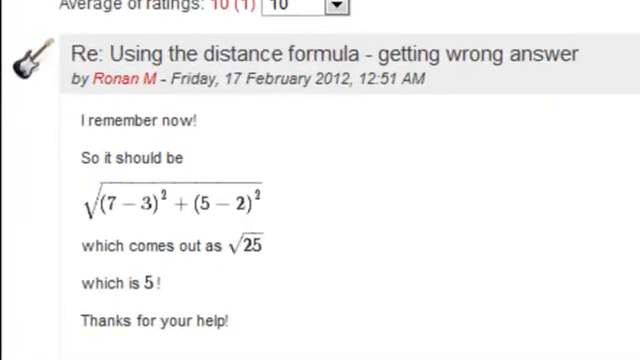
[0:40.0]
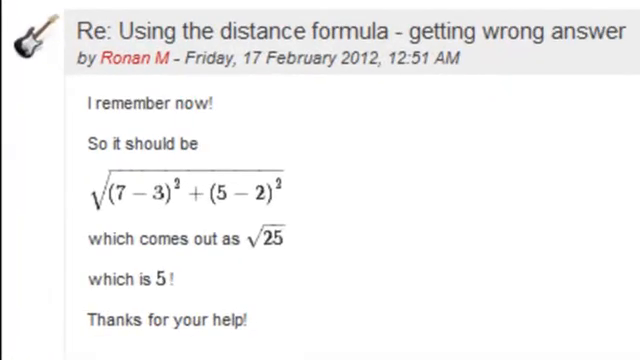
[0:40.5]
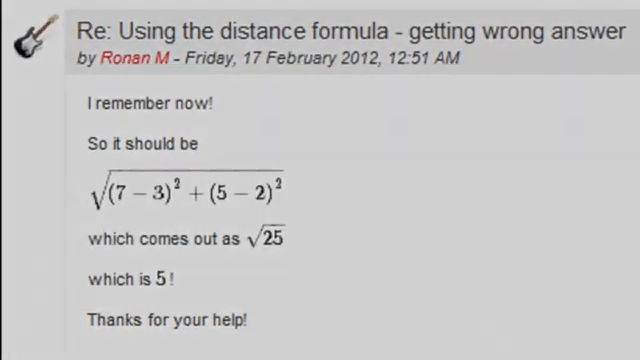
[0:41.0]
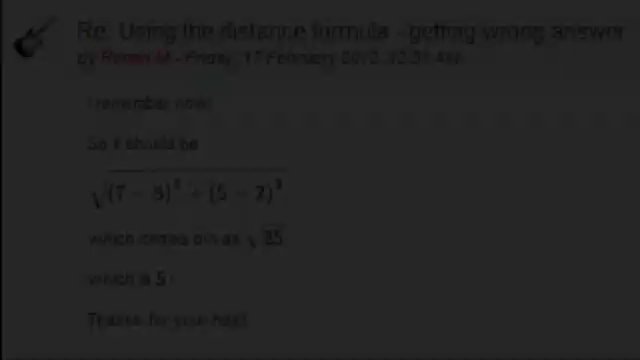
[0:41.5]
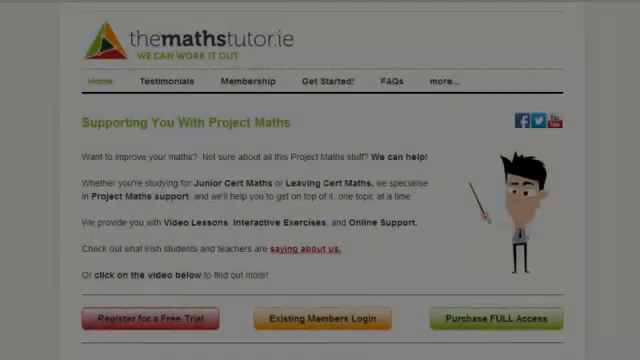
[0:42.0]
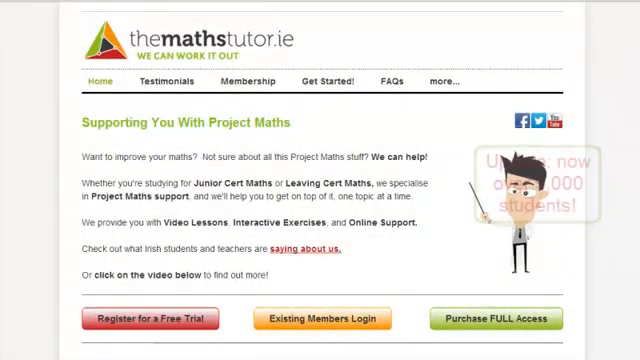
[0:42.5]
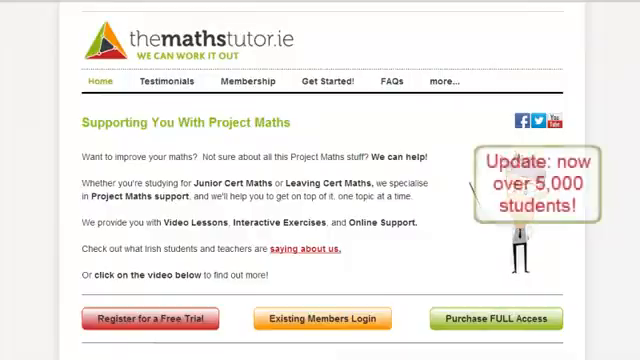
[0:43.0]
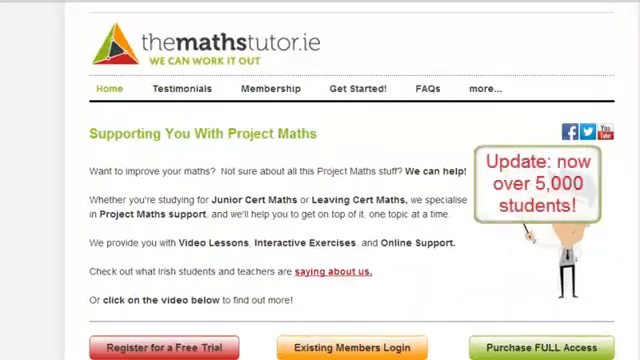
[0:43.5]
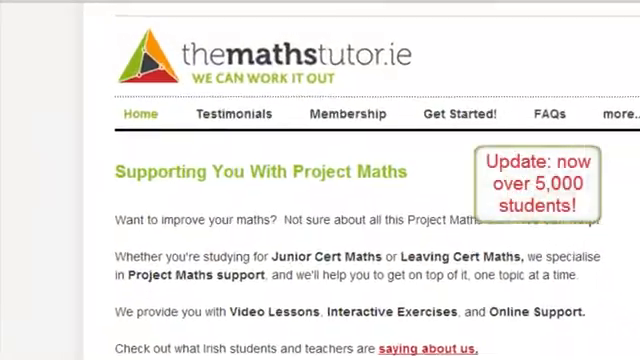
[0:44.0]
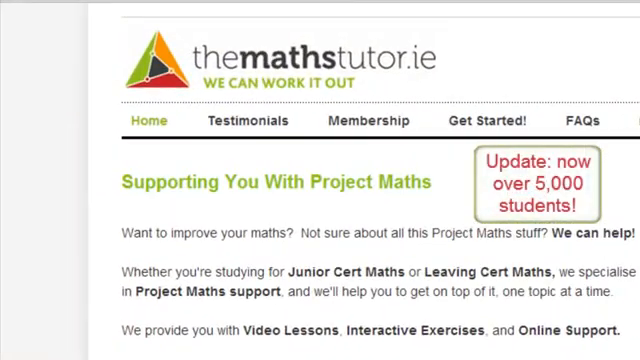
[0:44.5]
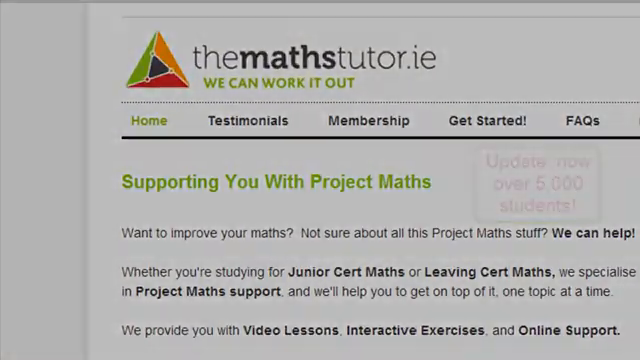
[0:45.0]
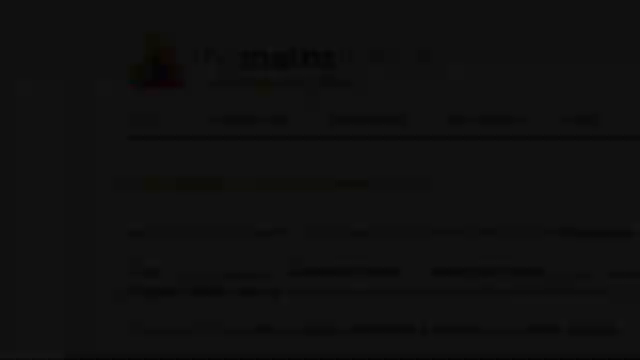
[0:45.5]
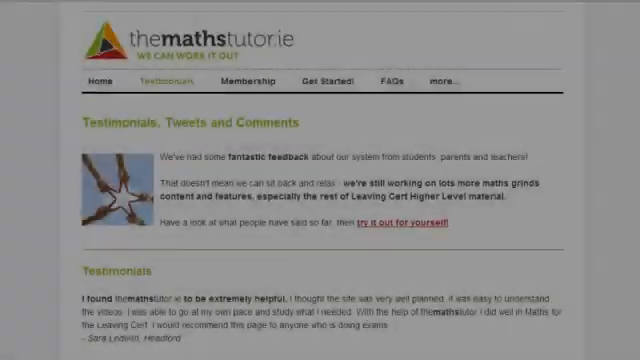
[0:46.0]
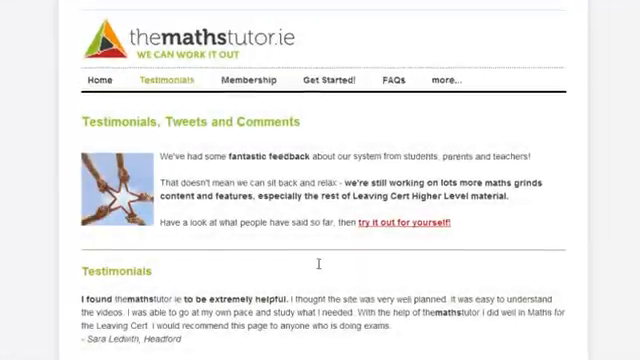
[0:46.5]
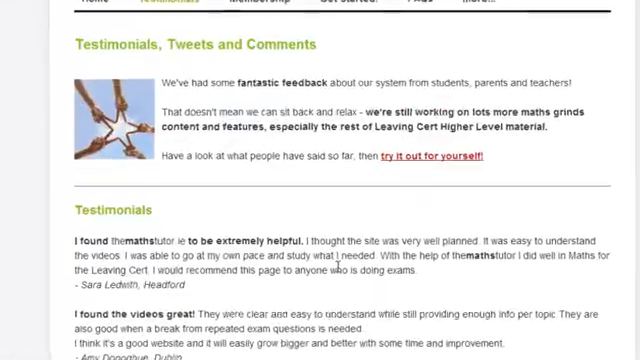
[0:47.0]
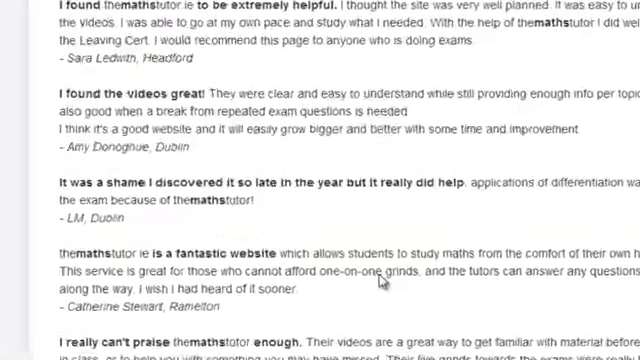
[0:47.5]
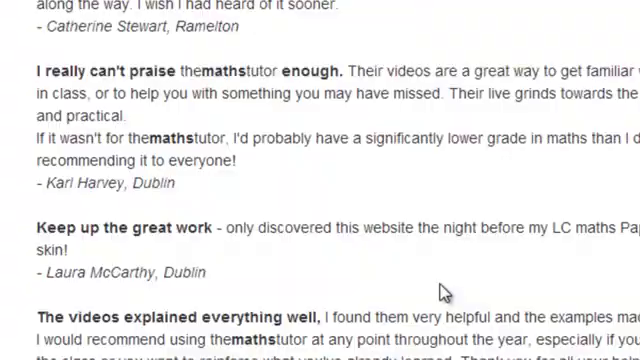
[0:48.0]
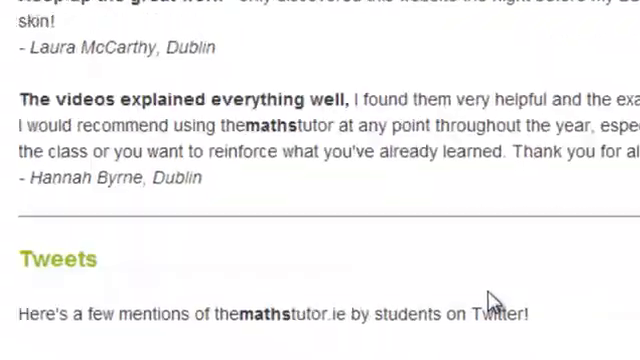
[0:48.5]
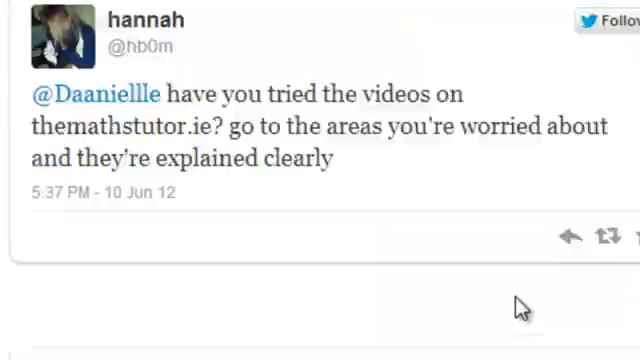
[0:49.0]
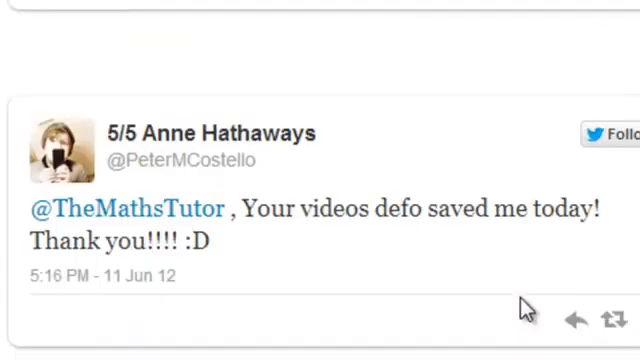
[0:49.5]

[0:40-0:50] The video moves to the bottom of the screen, showing how the question should be calculated to get the answer 5, giving the person who posted the issue the correct way to reach the textbook's answer. Next, a page shows text that says "supporting you with Project Maths," with a cartoon figure of a person holding a pointer on the side. An update appears that says "now over 5,000 students." The video then moves to the bottom, where posts from various people are shown.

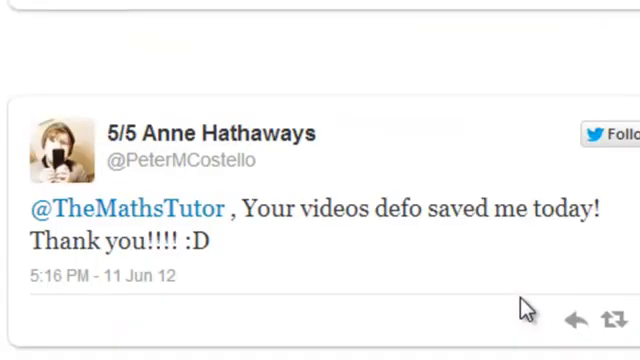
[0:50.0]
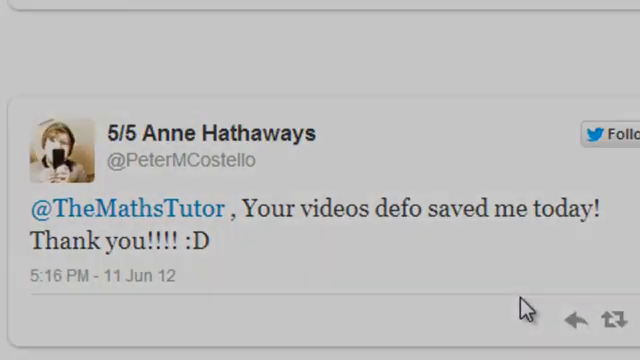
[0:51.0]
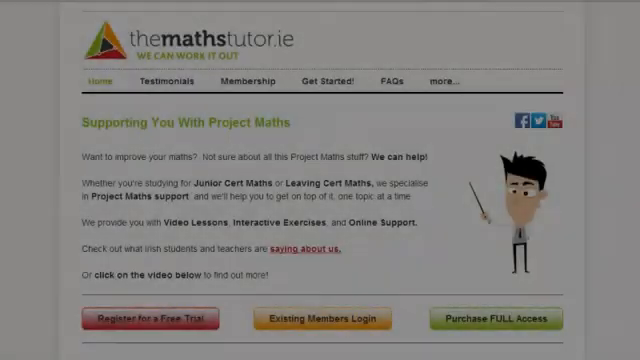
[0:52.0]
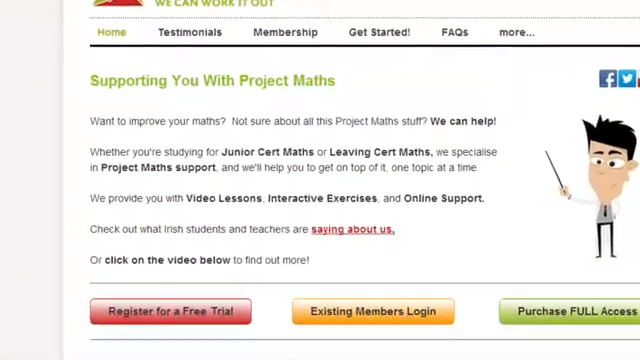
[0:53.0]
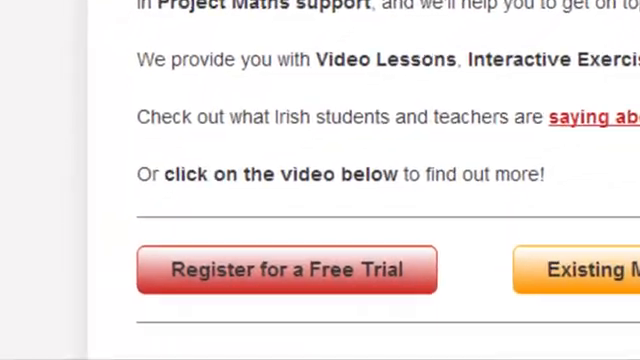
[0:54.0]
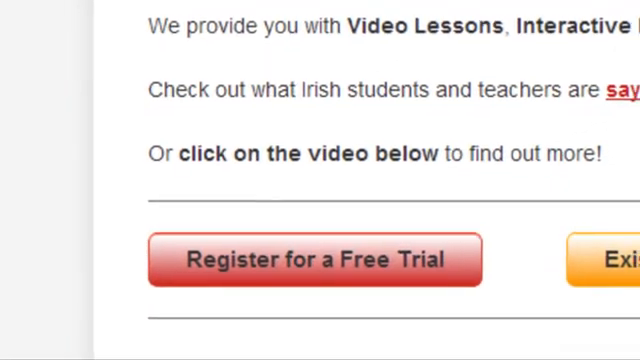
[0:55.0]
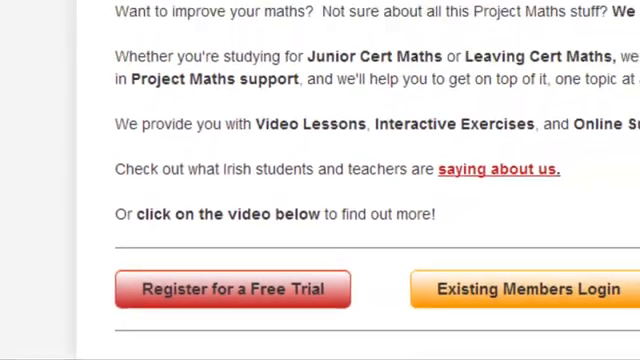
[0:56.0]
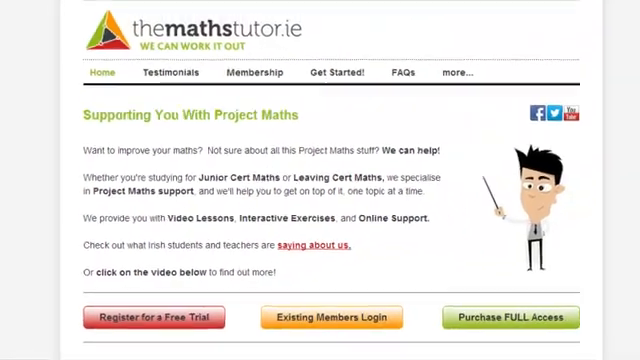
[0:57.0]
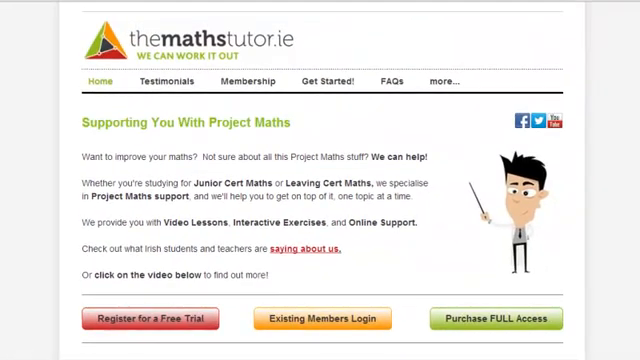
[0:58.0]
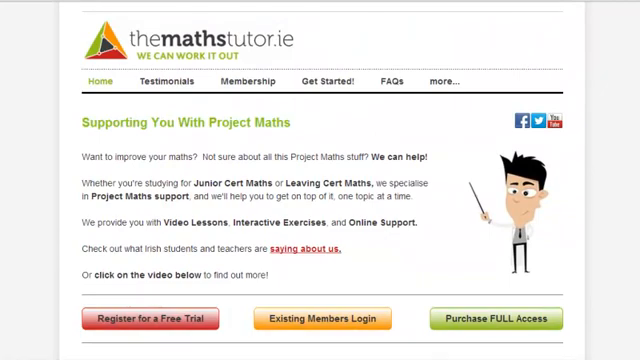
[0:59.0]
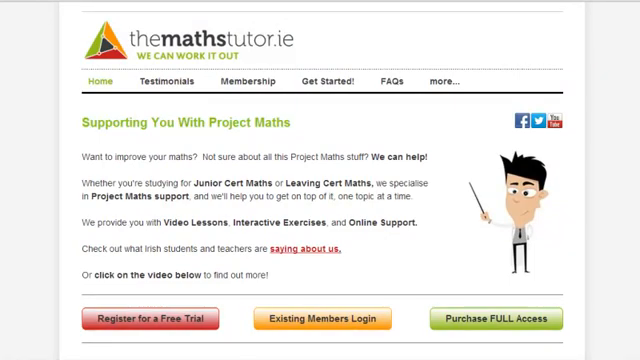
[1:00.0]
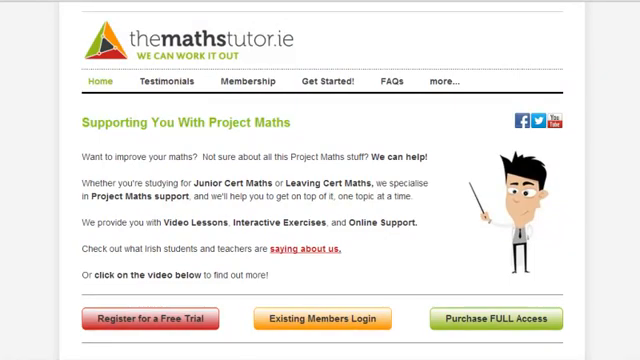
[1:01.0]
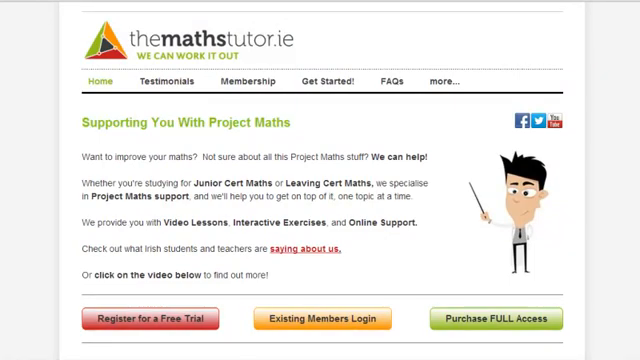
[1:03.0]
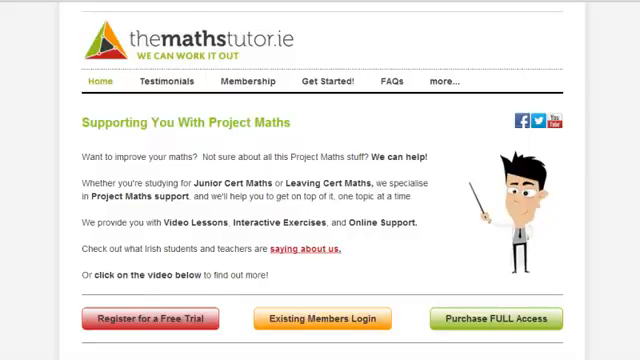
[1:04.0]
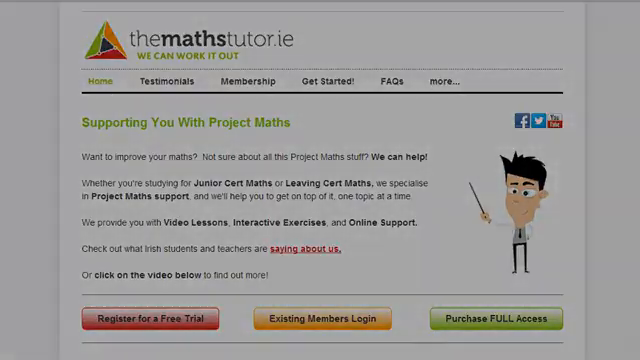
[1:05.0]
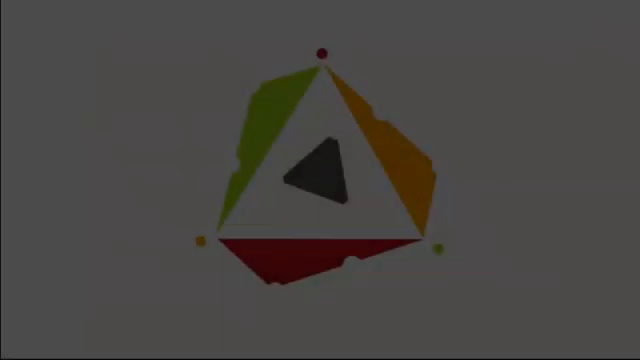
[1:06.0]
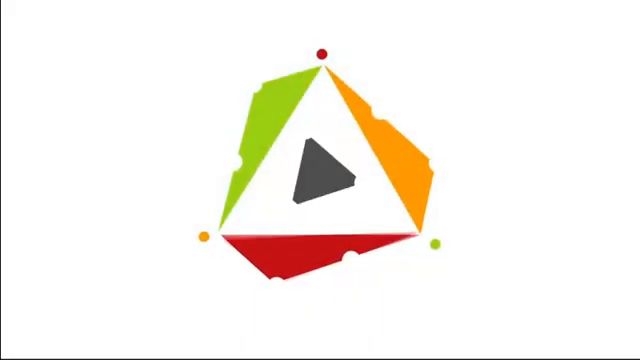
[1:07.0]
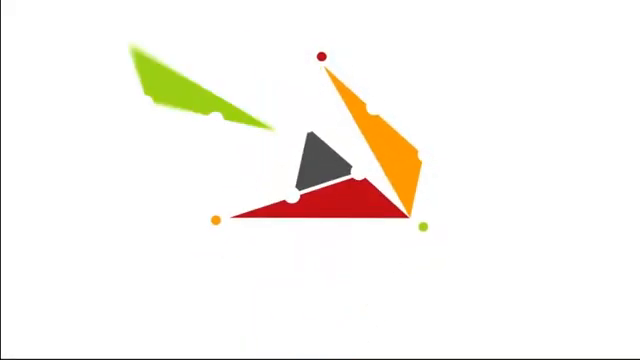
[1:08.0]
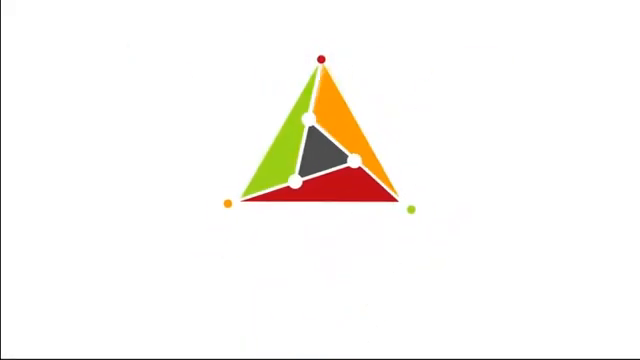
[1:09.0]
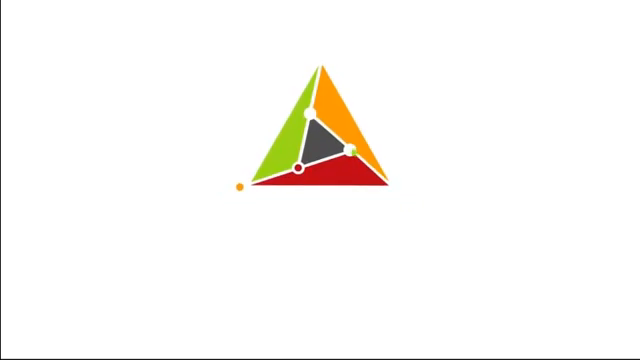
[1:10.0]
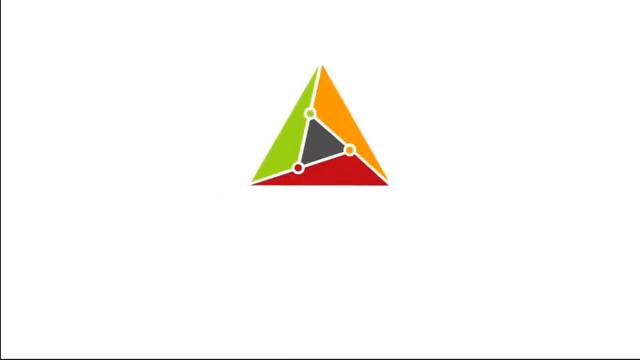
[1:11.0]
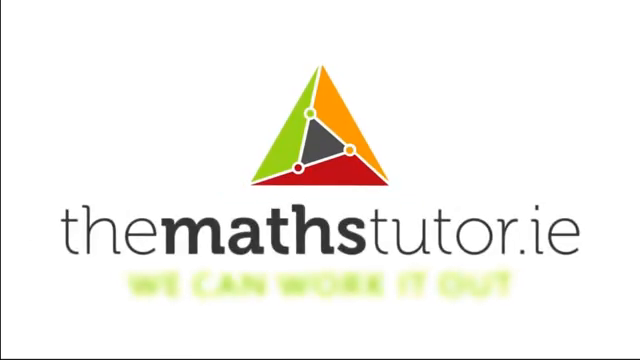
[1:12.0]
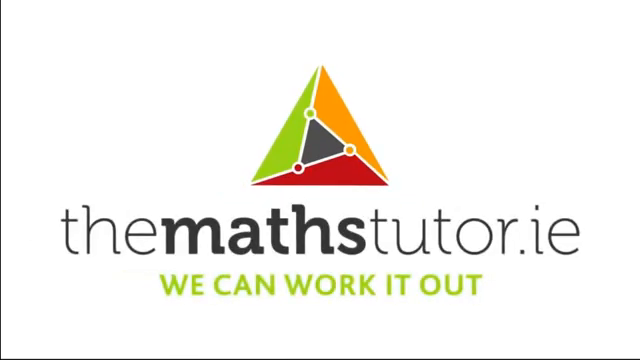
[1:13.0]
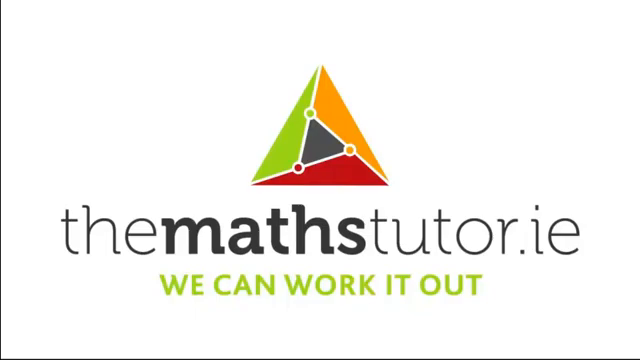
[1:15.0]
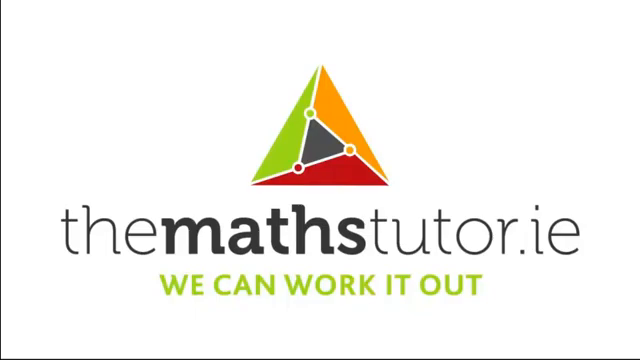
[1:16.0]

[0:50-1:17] A post is shown from 5 Over 5 Anne Hathaways, @PeterMCostello, saying "@themathstutor Your videos defo saved me today! Thank you!!!!" It was posted on 11 June 2012 at 5pm. The poster's profile picture shows a man holding a phone in front of his face so that the face is partially visible. The screen then goes back to the "supporting you with maths projects" page and zooms in on "register for a free trial," which is in a red box. Next, the pyramid icon from the start of the video appears, its sides being deconstructed to make the pyramid, and the text "TheMathTutor.ie" appears at the bottom. Also at the bottom, "WE CAN WORK IT OUT" is written in green capital letters.